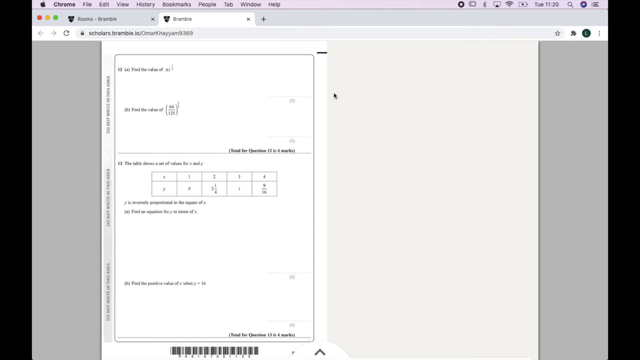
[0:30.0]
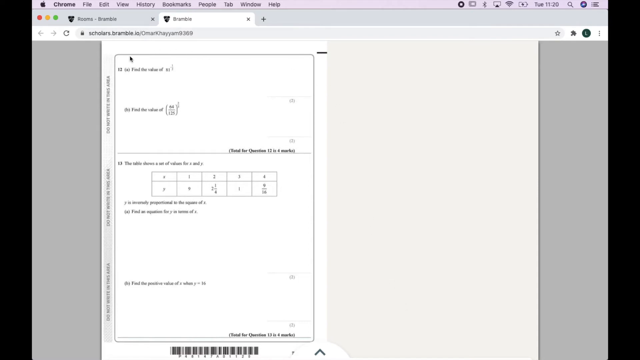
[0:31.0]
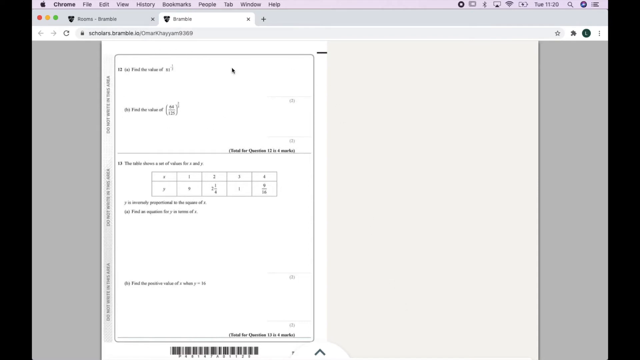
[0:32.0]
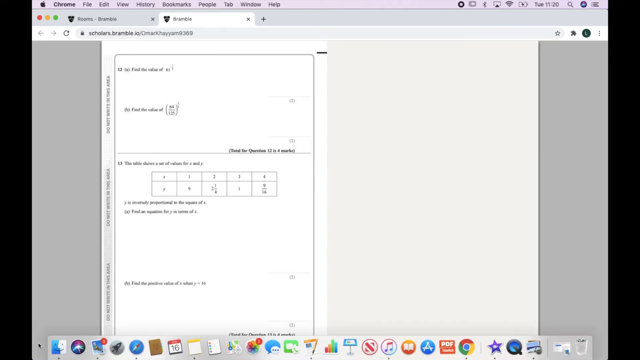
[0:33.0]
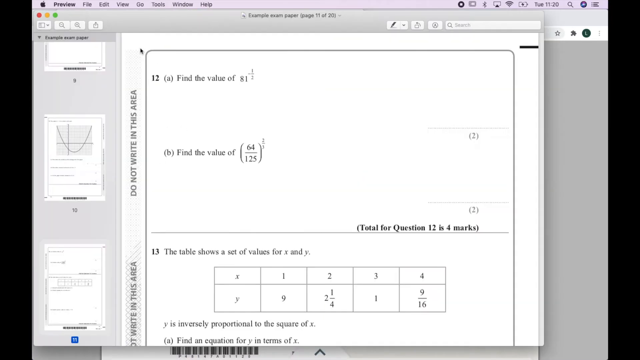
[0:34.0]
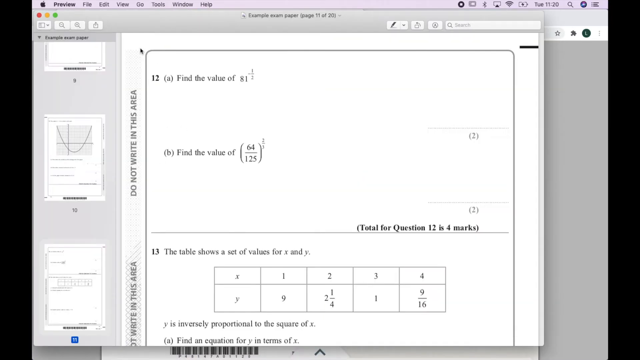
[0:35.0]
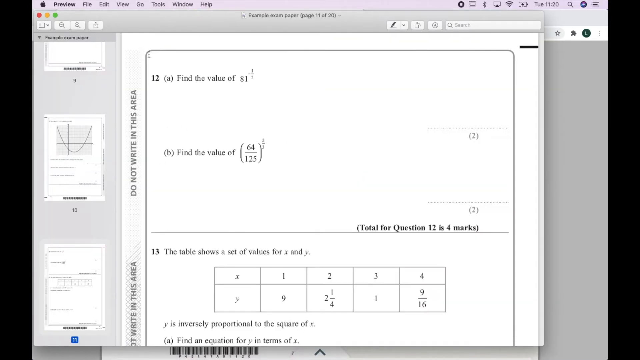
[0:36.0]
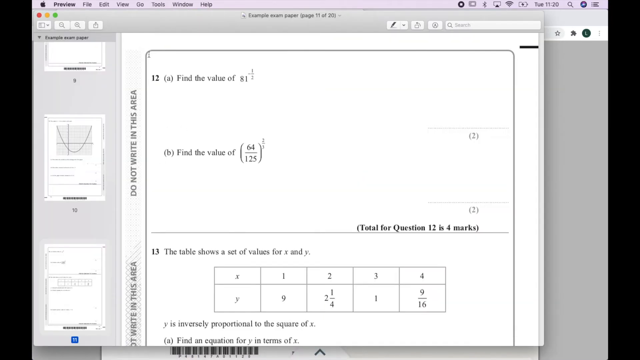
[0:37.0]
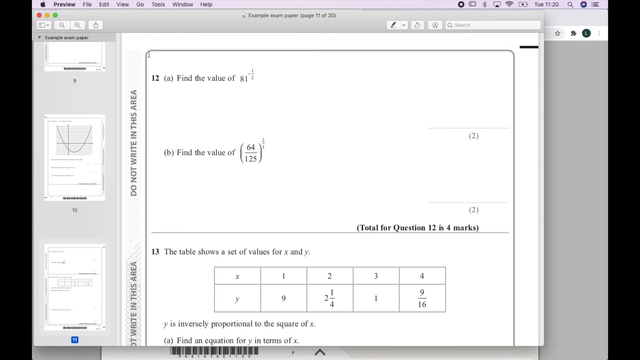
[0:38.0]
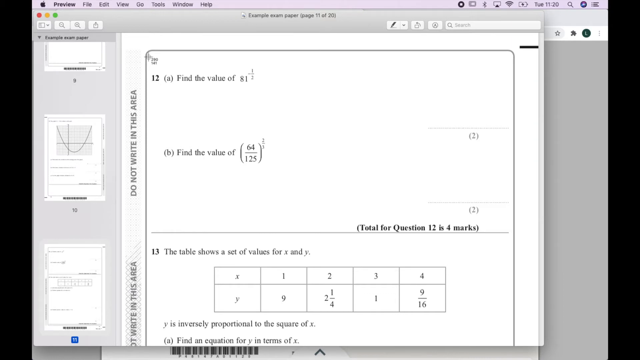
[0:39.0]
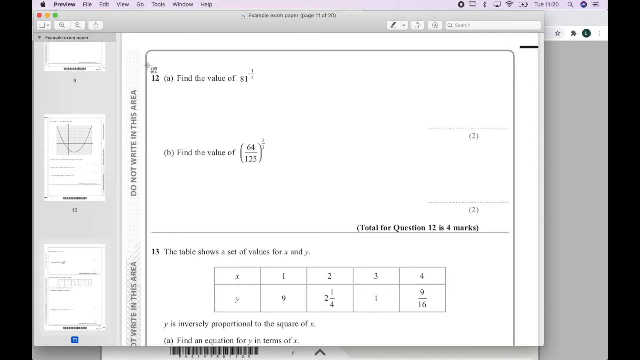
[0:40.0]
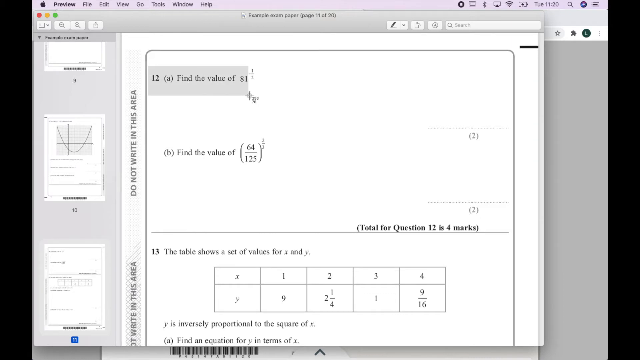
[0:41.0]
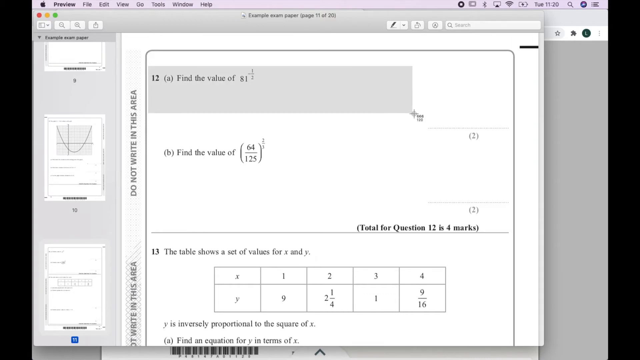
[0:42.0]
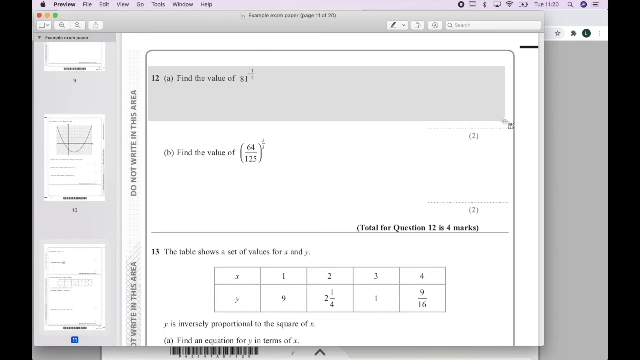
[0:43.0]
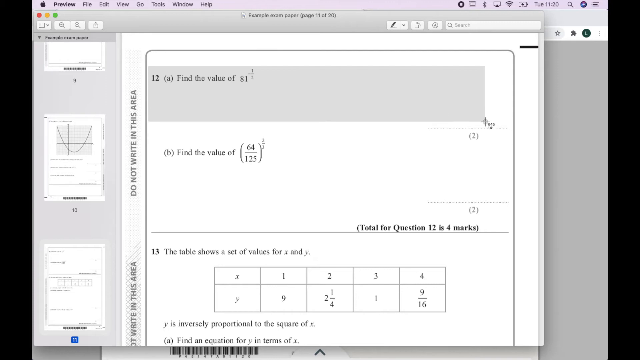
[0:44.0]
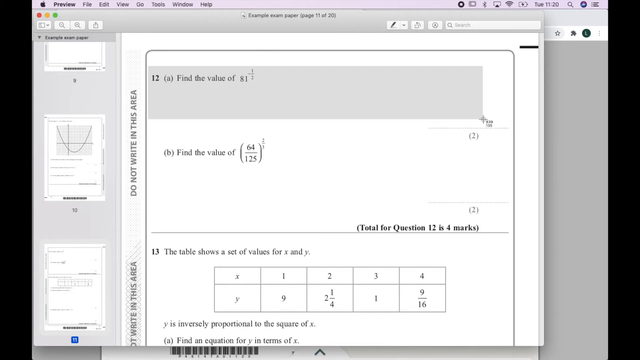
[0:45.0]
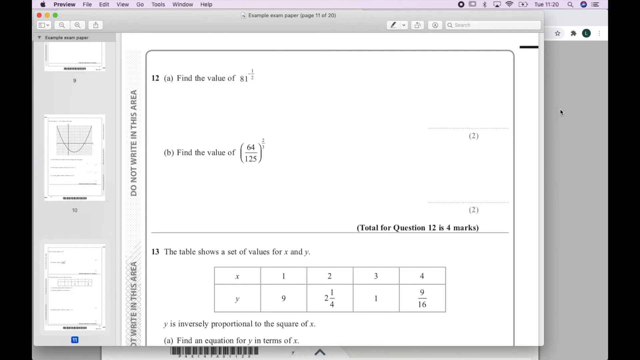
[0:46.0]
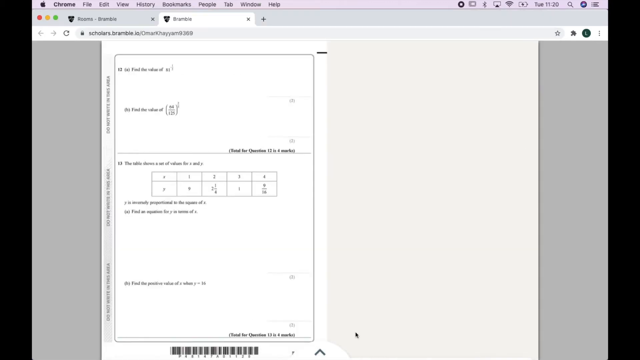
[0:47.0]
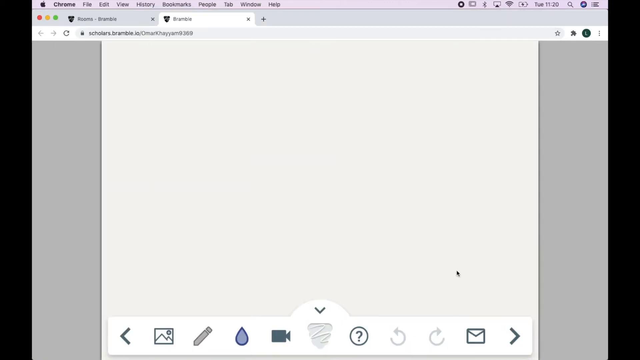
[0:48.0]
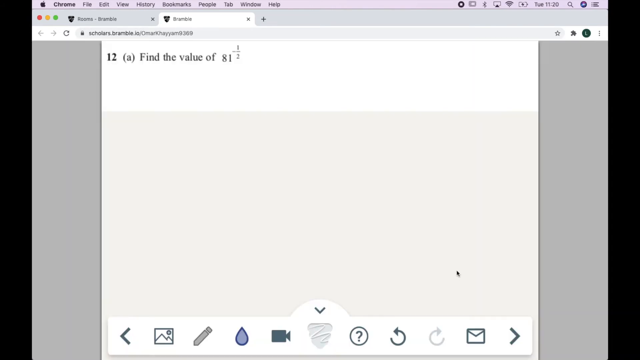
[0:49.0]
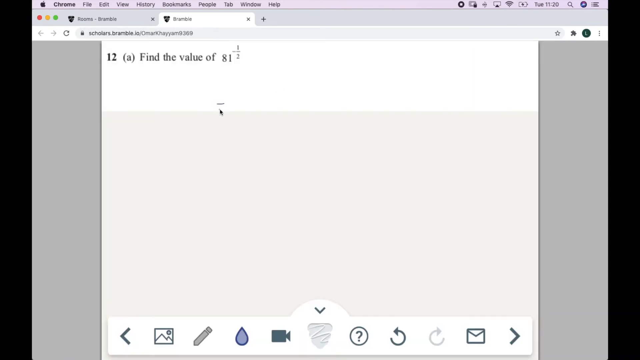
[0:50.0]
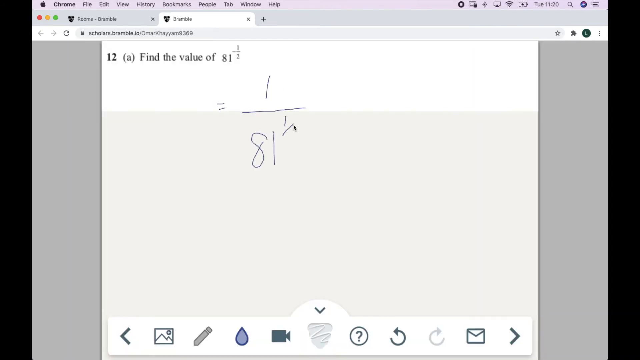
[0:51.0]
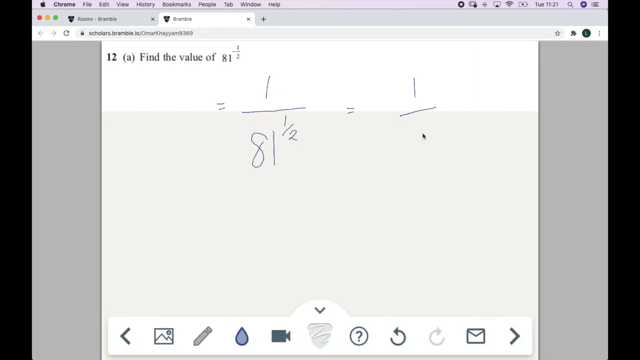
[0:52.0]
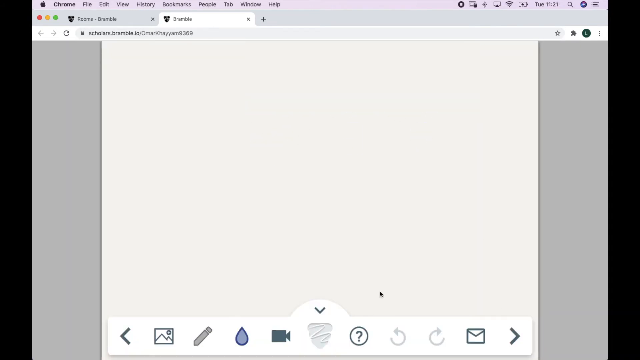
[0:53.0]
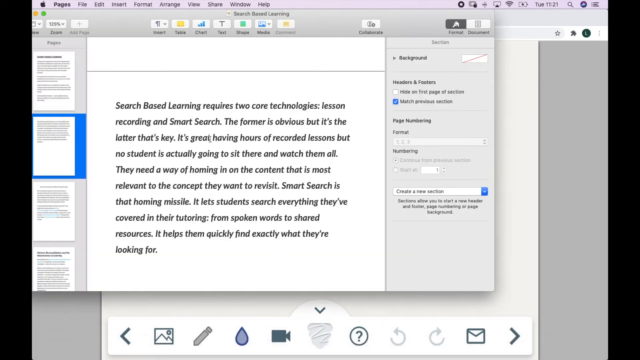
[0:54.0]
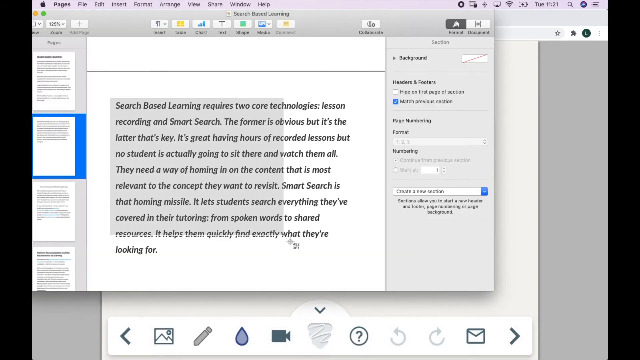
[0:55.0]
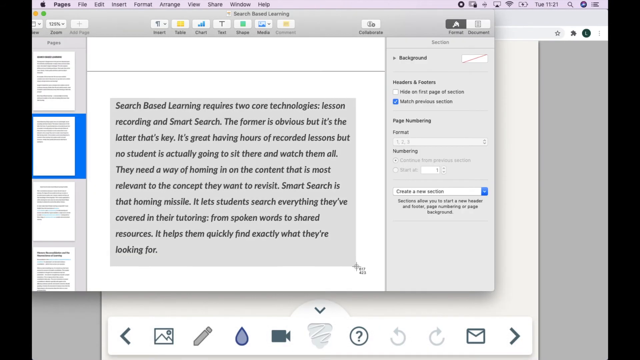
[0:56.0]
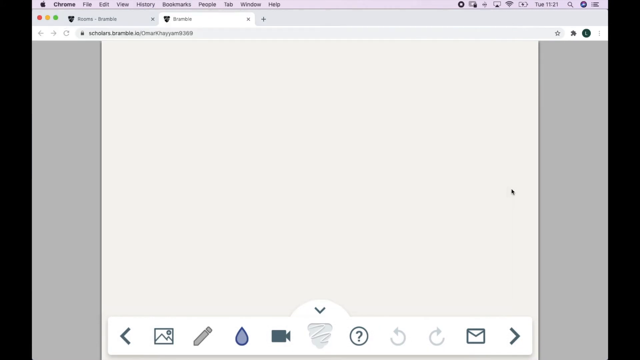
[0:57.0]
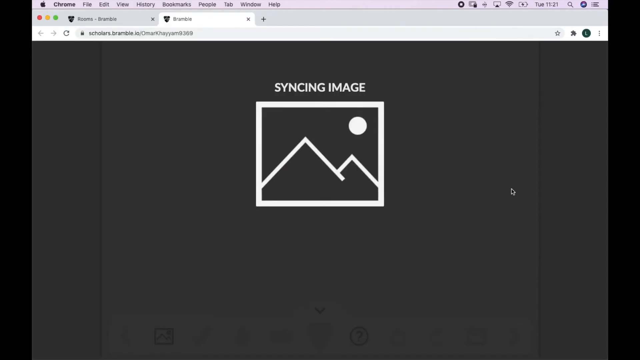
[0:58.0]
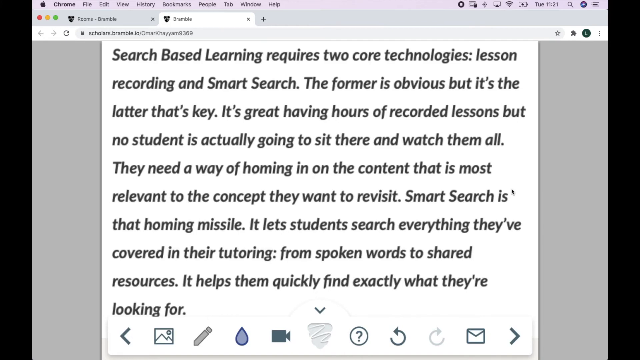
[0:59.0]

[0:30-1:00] The person moves the cursor in a roughly circular motion over 1.2, then moves it down. A screen pops up and the person zooms in, making question 1.2 clearly visible. On the side is the text "do not write in this area", and three pages appear on the left-hand side. Question 1.2 has a question A and a question B, worth two marks each, with a total of four marks for 1.2. The person answers the question, writing or drawing 1 divided by 18, a half, and that it equals 1 over 9. The view then goes to another page that reads "search-based learning requires two core technologies". Something then opens that looks more like a periodic table.